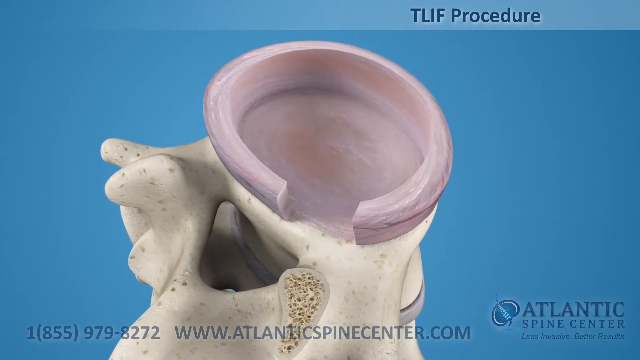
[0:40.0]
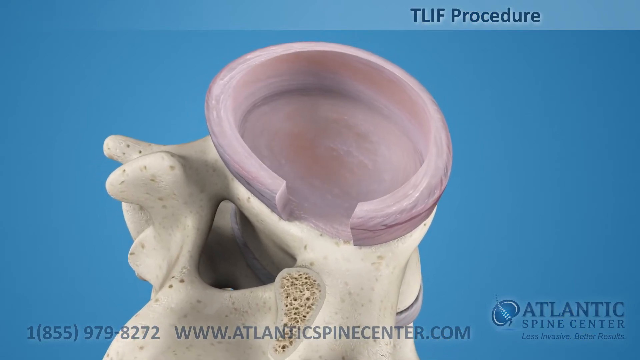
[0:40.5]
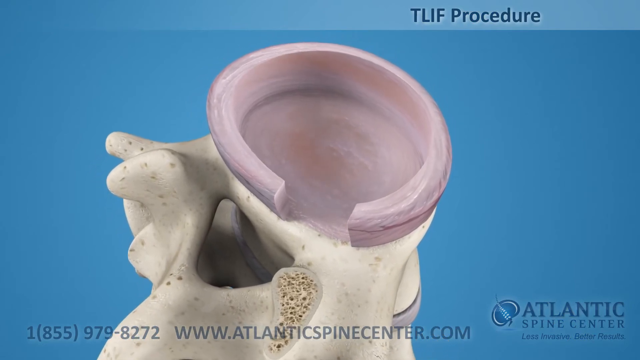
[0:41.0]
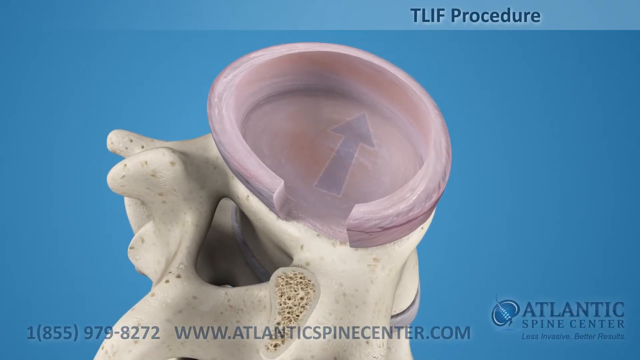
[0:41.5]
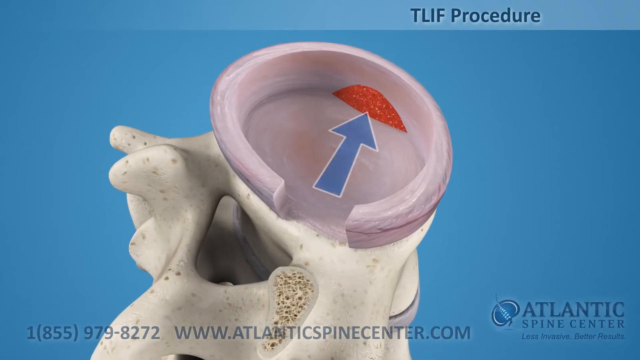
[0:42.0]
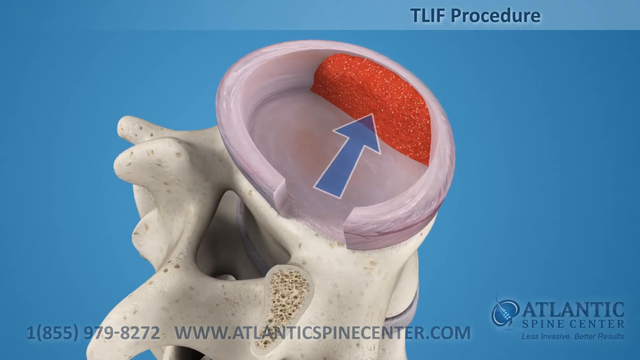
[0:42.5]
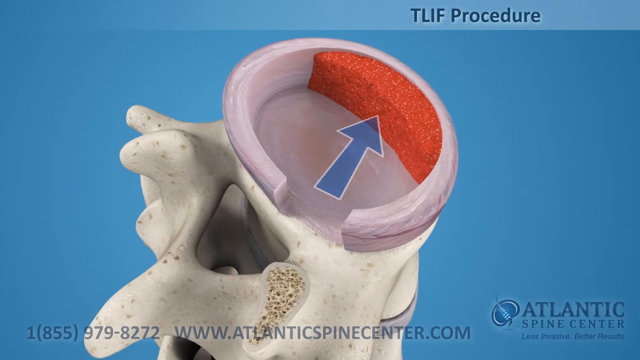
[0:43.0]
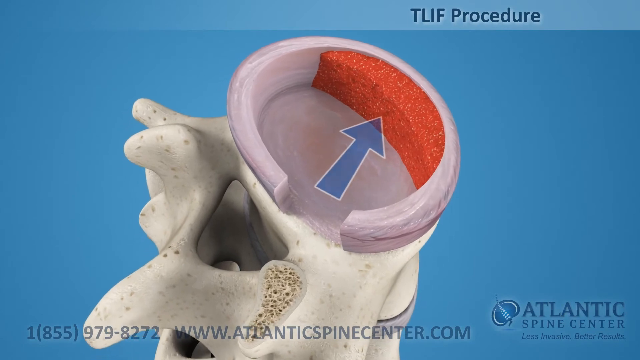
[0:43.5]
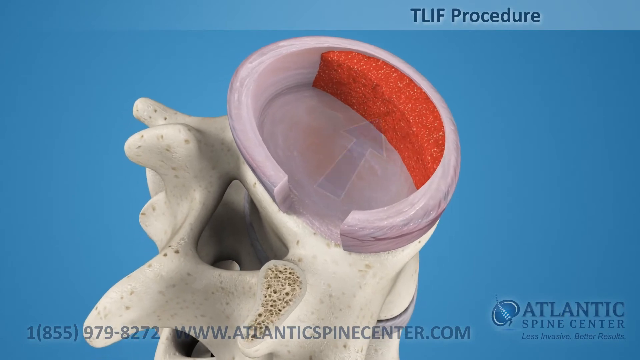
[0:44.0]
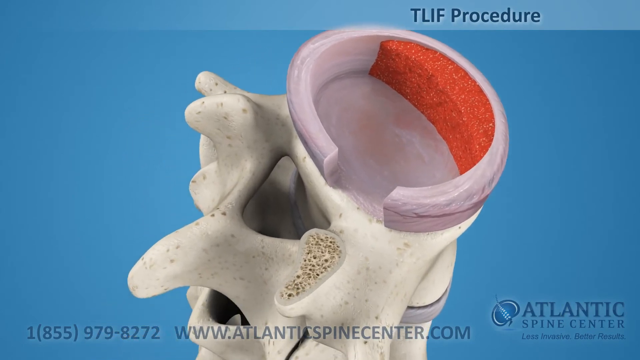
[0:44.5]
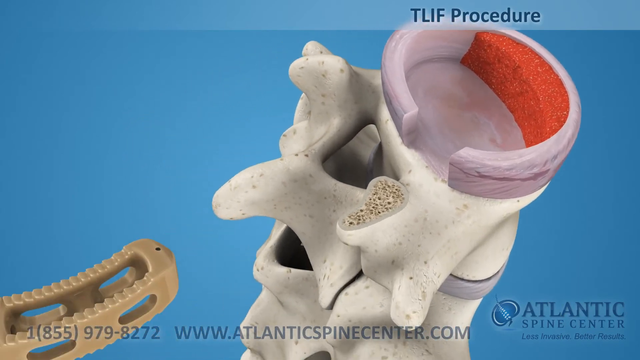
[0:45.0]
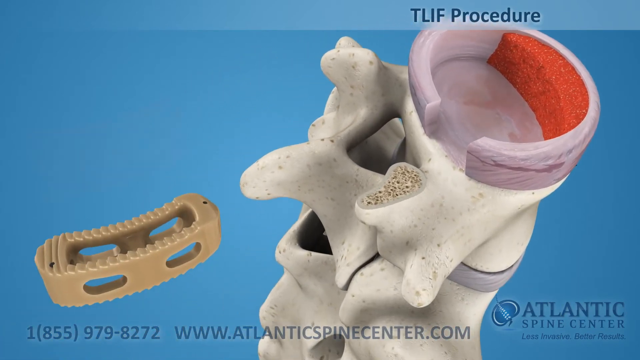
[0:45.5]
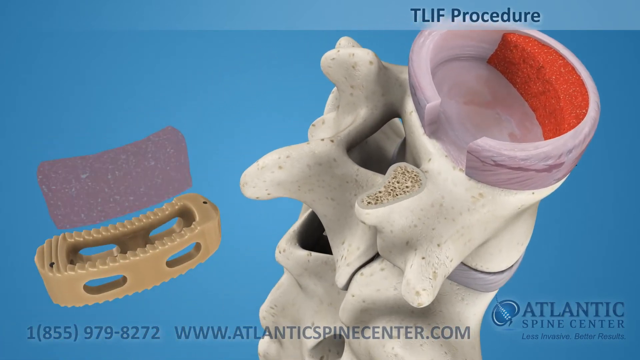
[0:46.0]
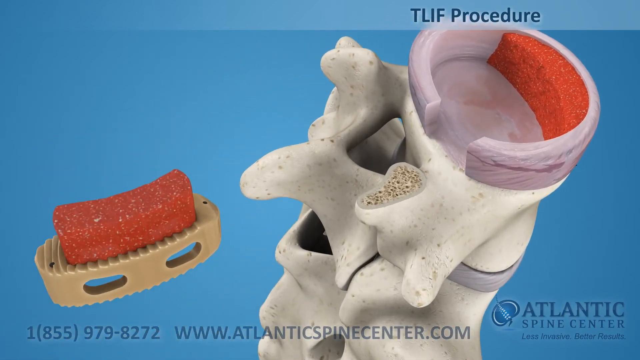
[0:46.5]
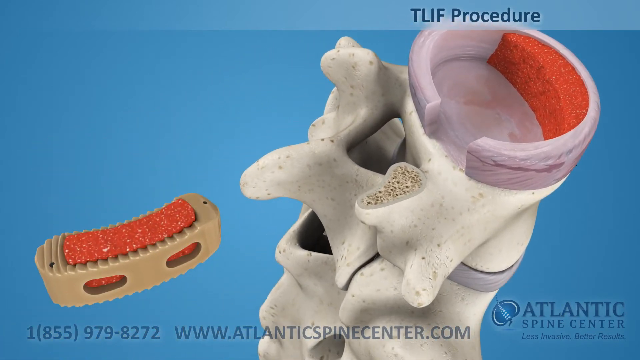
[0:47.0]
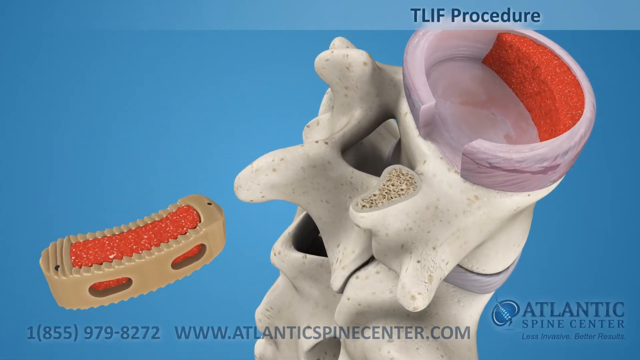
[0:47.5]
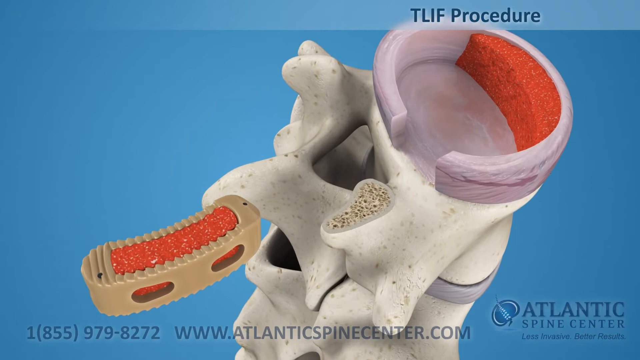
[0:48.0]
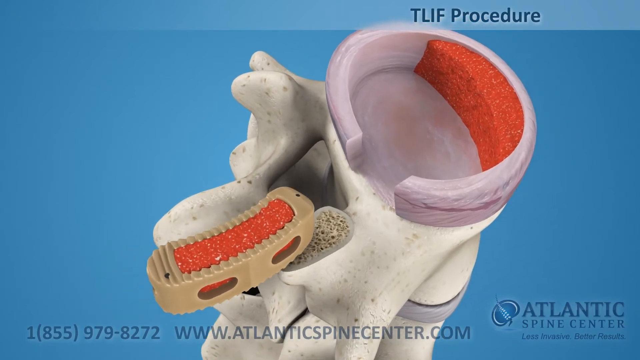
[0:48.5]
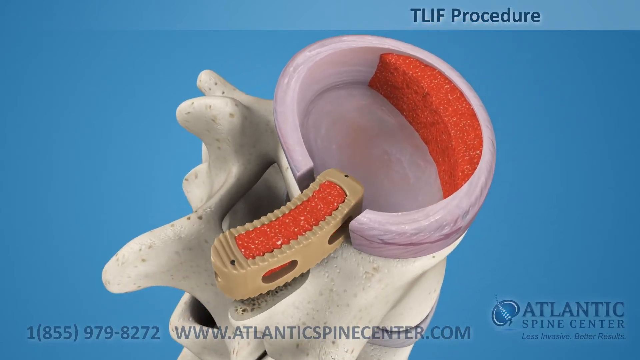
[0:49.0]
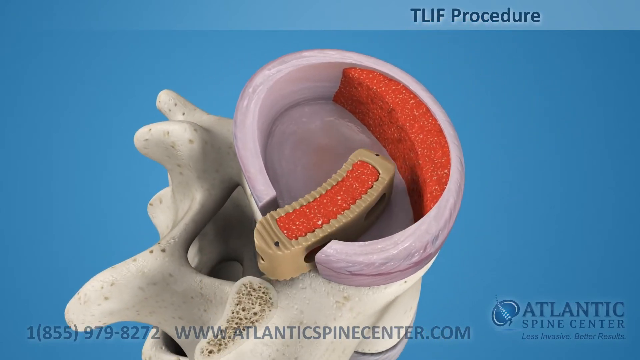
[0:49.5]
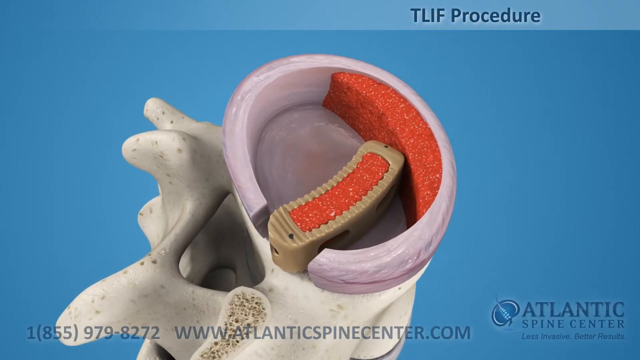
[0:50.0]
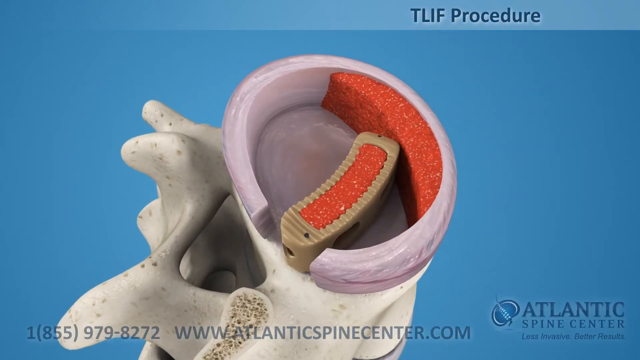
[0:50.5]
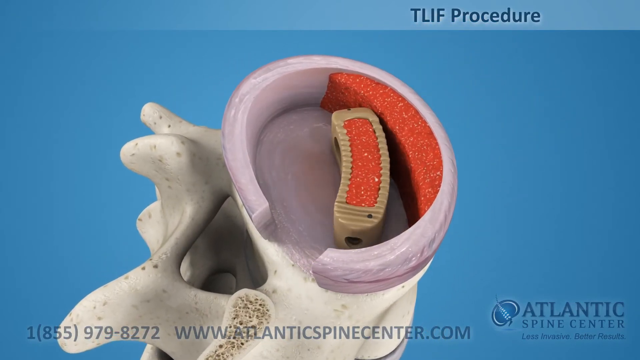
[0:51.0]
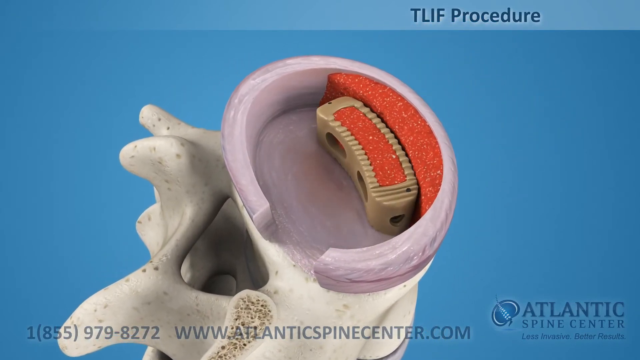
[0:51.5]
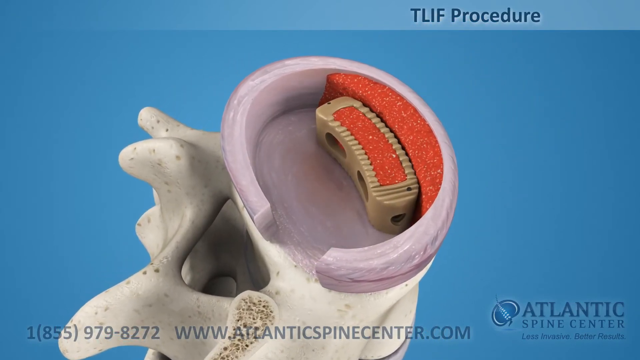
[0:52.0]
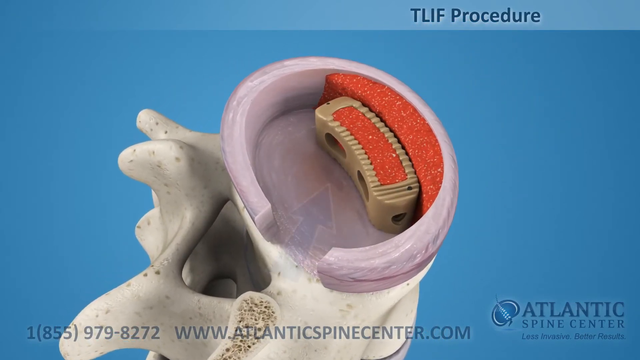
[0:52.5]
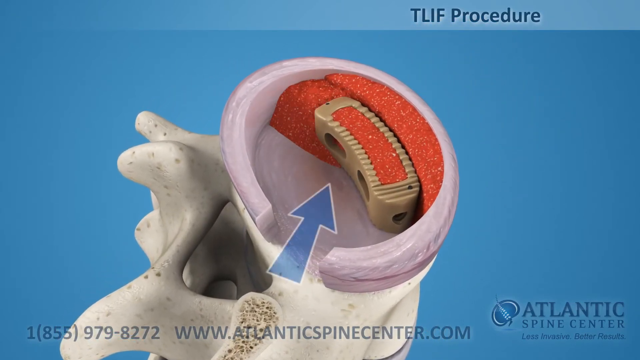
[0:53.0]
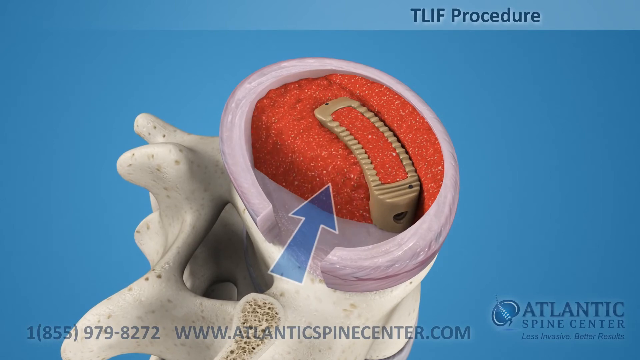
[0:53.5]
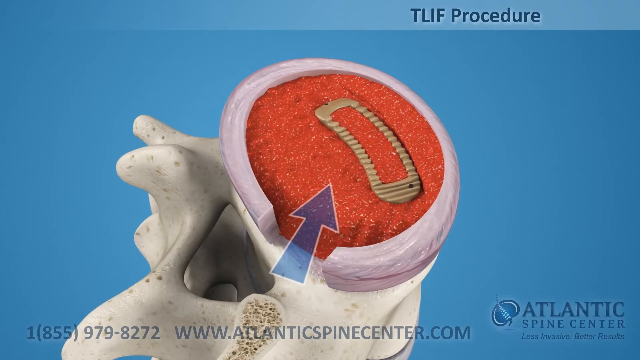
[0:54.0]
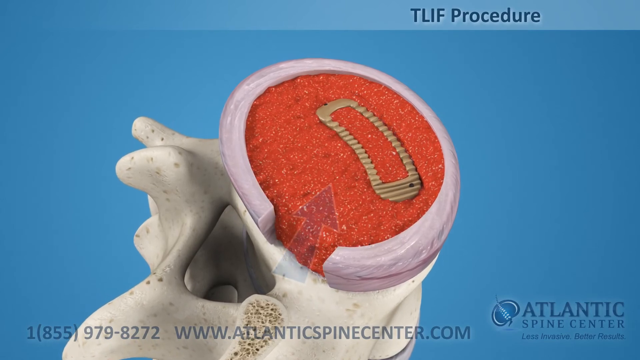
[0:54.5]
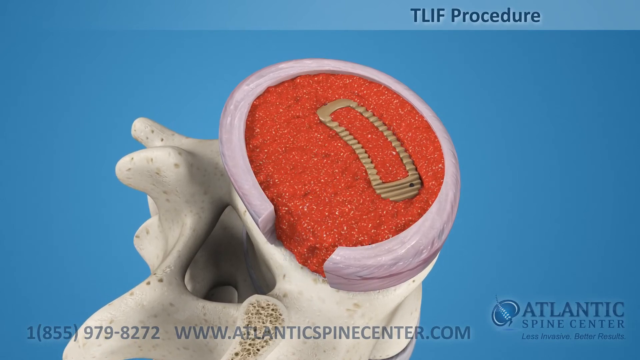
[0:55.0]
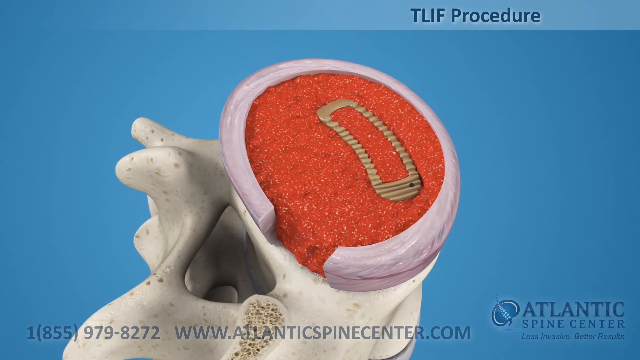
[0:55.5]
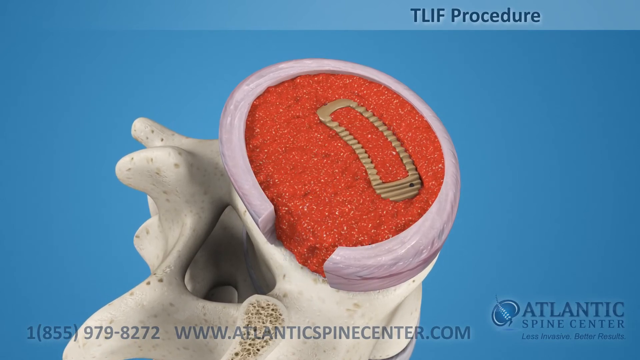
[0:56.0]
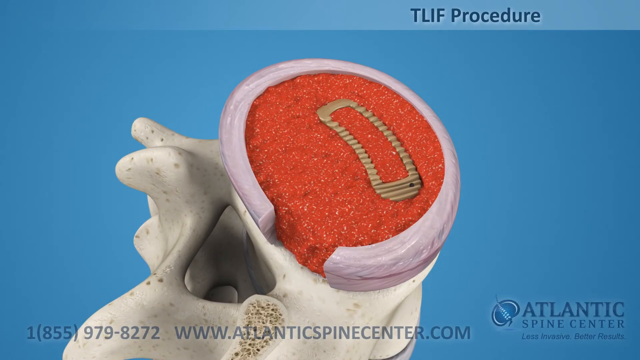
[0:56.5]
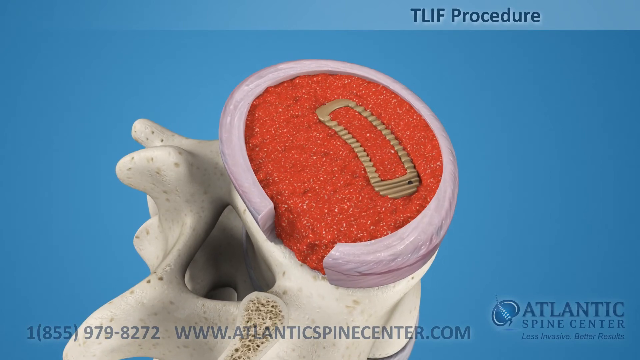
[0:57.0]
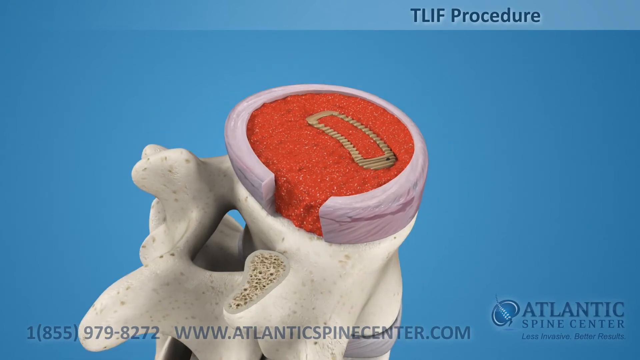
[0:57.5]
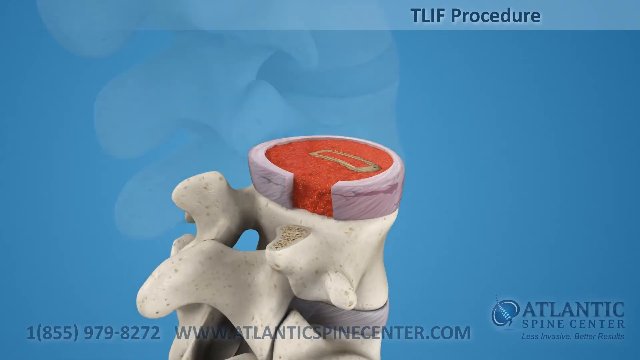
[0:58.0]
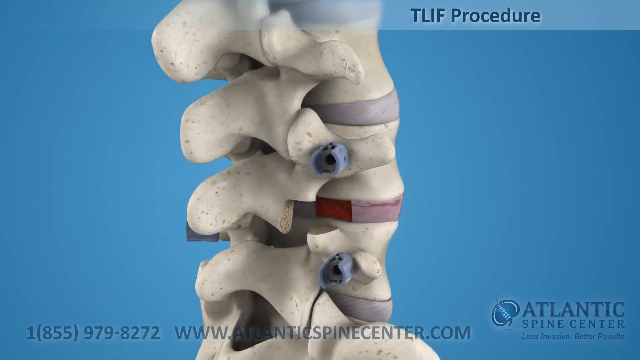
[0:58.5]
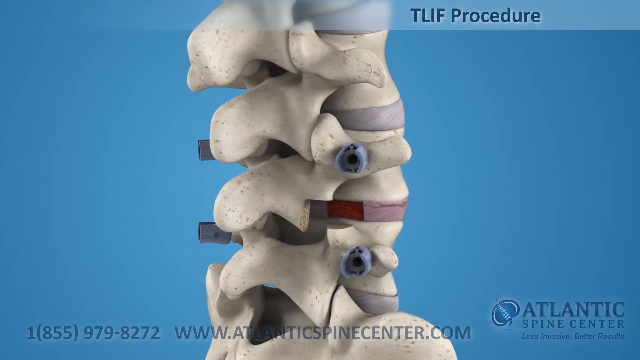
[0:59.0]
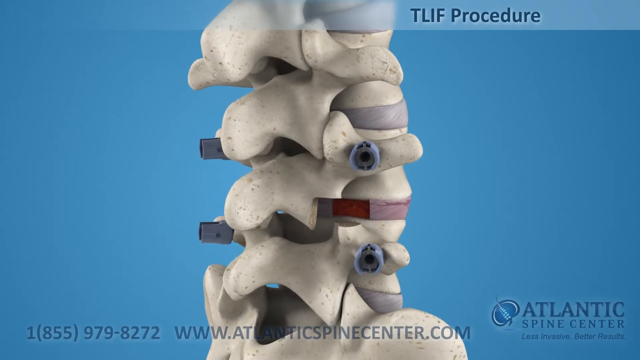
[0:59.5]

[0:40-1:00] The cleaned-out area of the disc is shown, and a blue arrow appears into this area. A red image then appears toward the back side of the cleaned-out disc and spreads around the entire back side. A beige medical device comes into the left side of the screen, and its inner portion appears to be filled with a red sponge-like material, just like the red sponge-like material in the back side of the disc. The medical device is inserted into the disc and put into place, and then the entire disc is filled with the red sponge-like material. Once it is fully inserted, the disc is placed back inside the spine, and the view starts to move again, turning the spine around to give a better view of the outcome of the procedure.